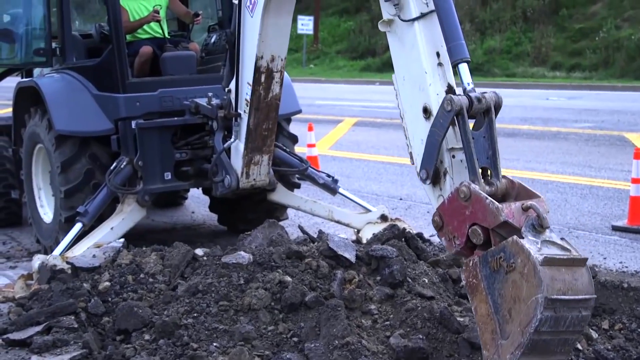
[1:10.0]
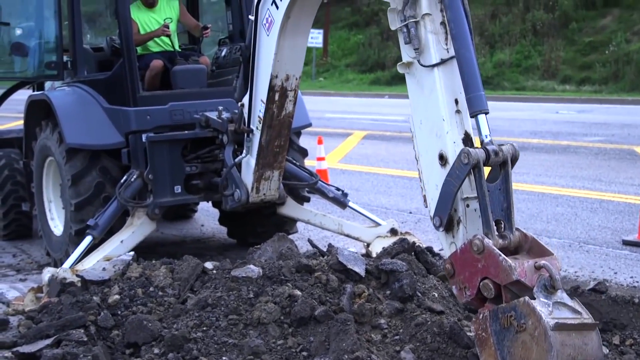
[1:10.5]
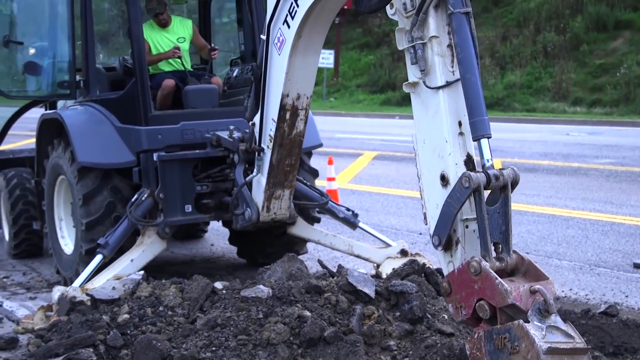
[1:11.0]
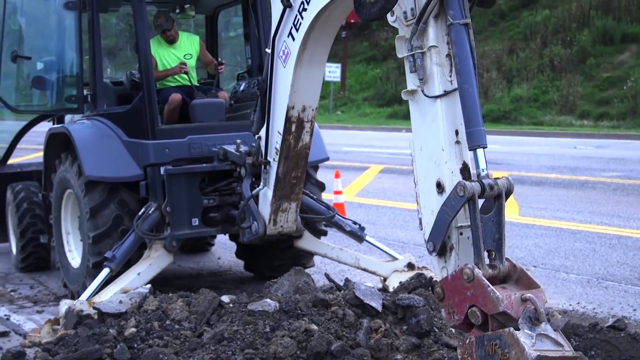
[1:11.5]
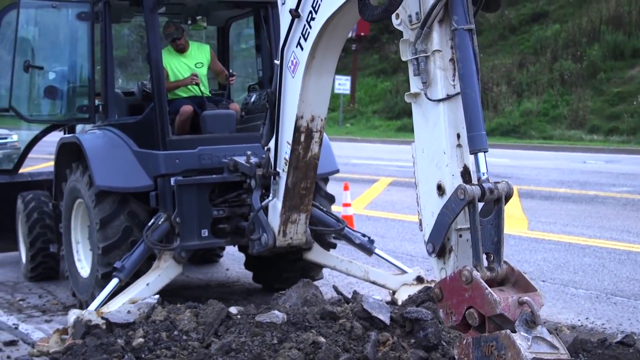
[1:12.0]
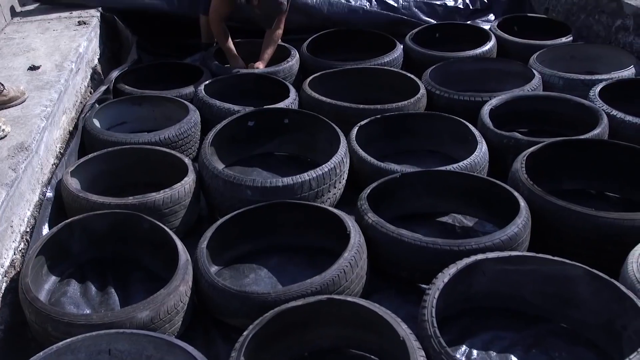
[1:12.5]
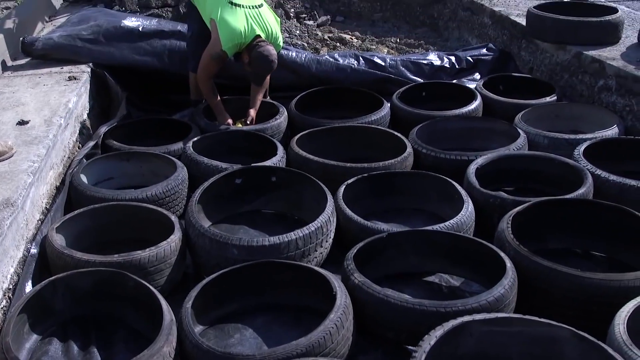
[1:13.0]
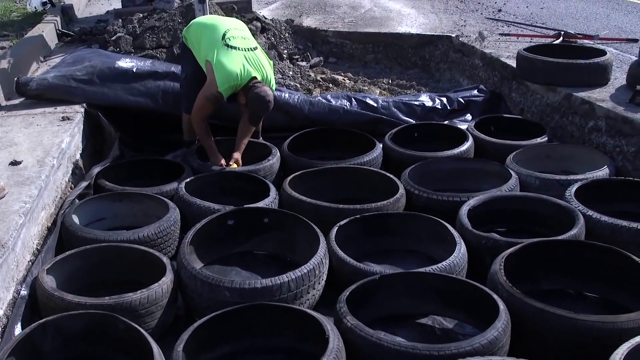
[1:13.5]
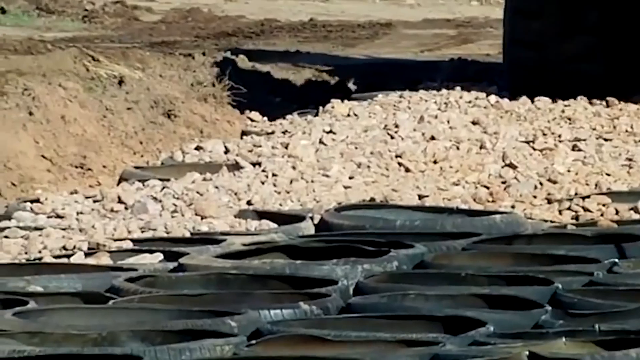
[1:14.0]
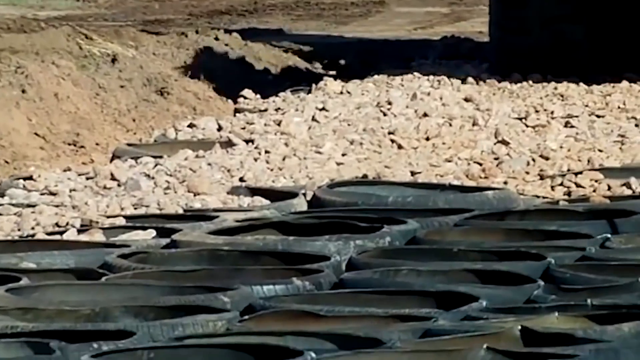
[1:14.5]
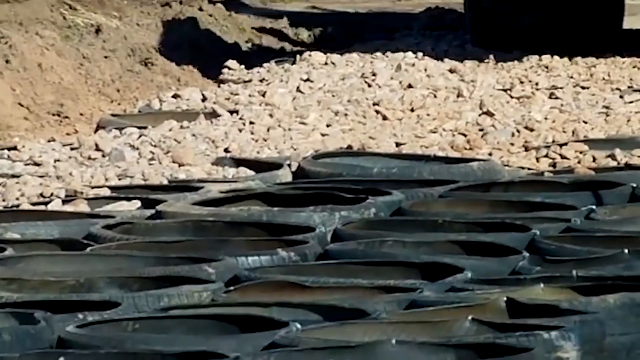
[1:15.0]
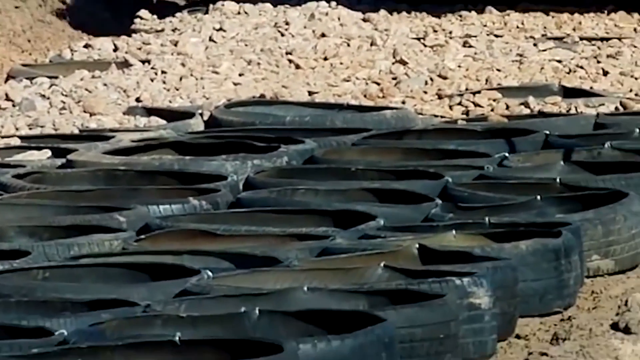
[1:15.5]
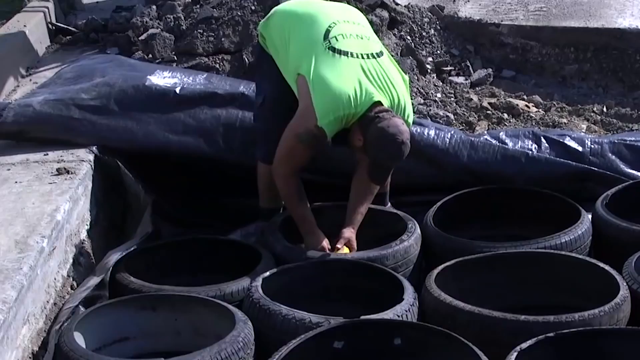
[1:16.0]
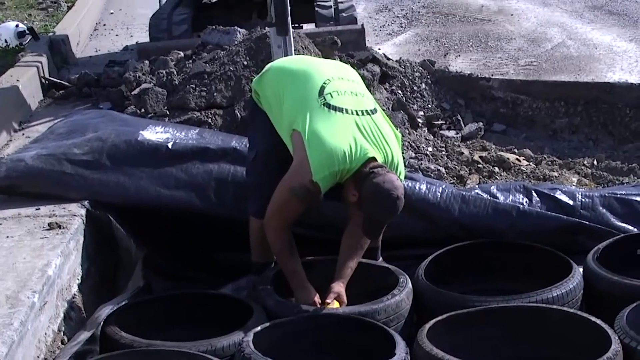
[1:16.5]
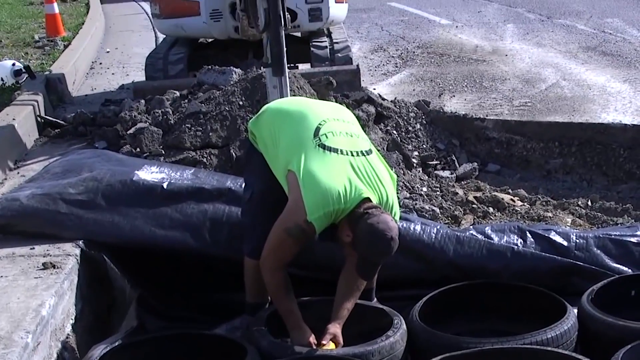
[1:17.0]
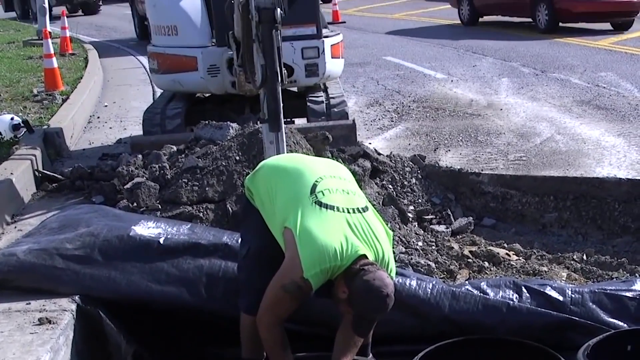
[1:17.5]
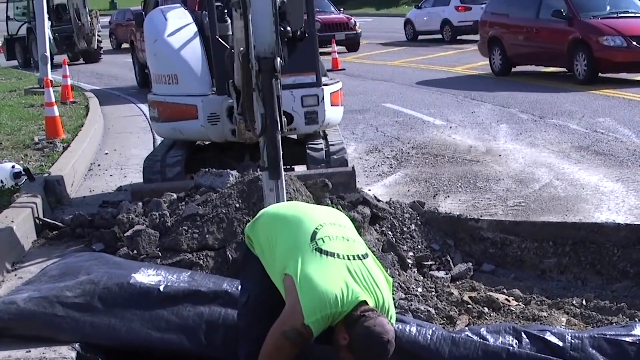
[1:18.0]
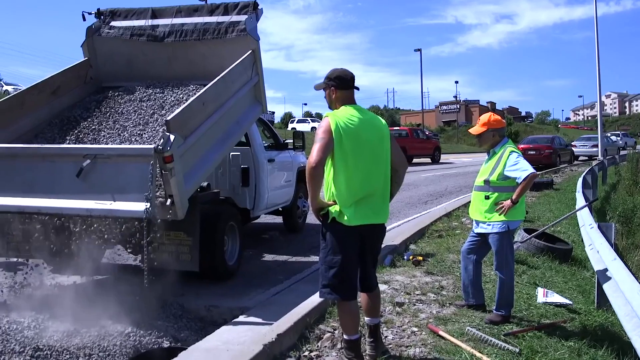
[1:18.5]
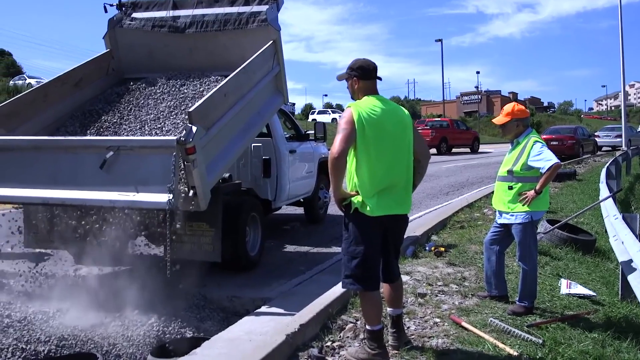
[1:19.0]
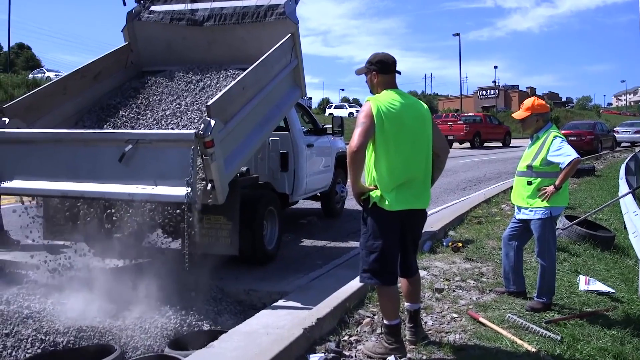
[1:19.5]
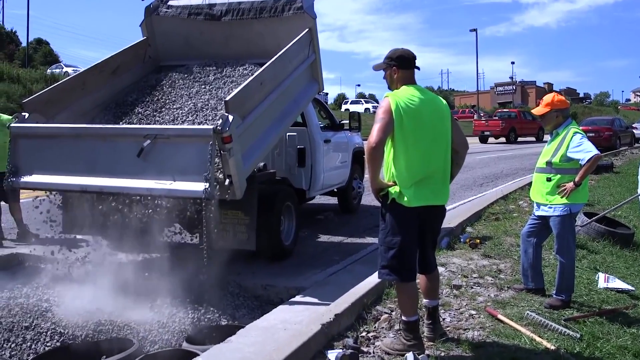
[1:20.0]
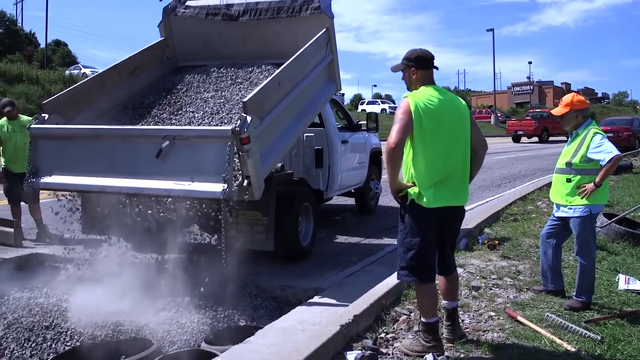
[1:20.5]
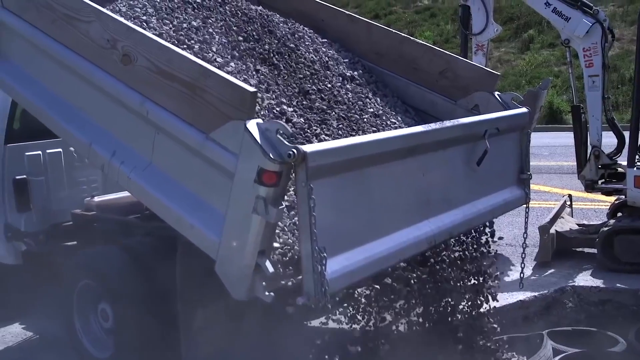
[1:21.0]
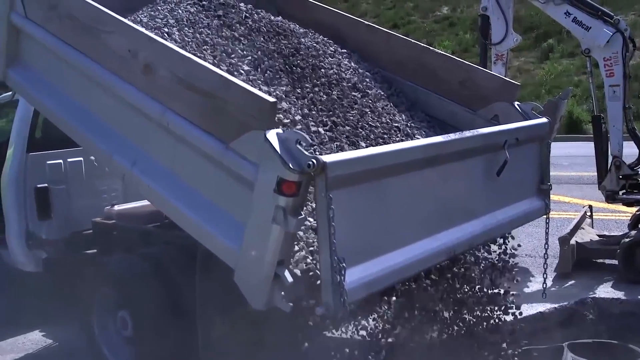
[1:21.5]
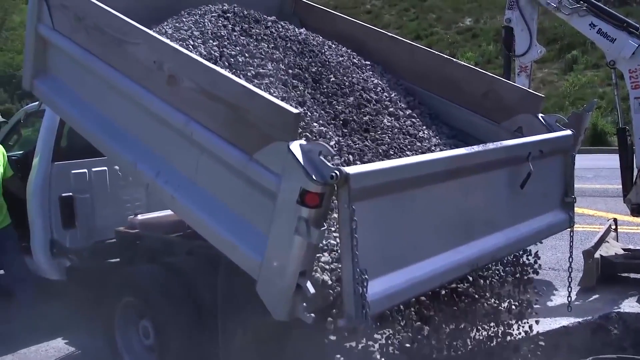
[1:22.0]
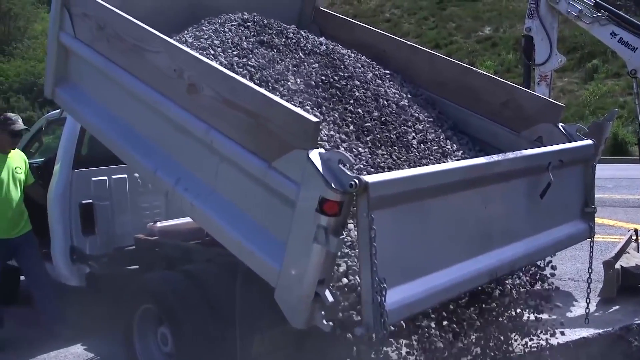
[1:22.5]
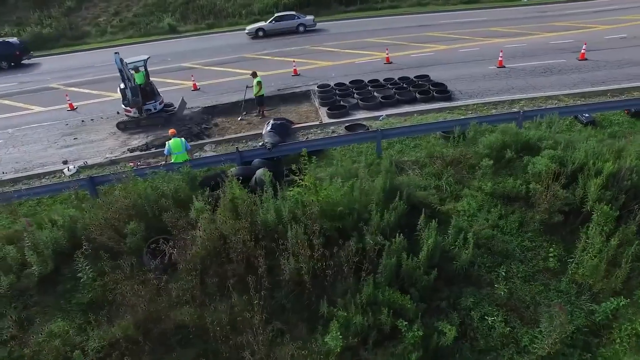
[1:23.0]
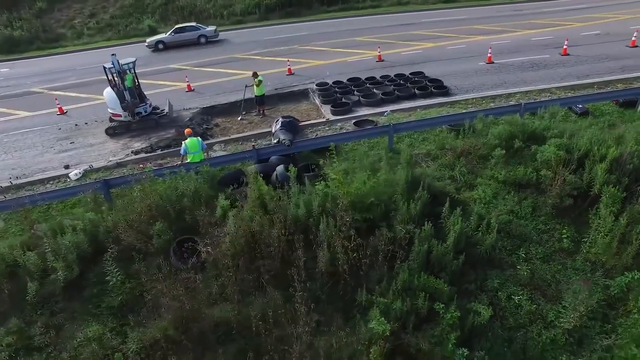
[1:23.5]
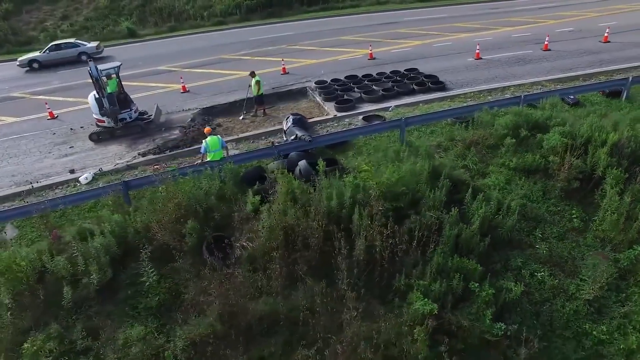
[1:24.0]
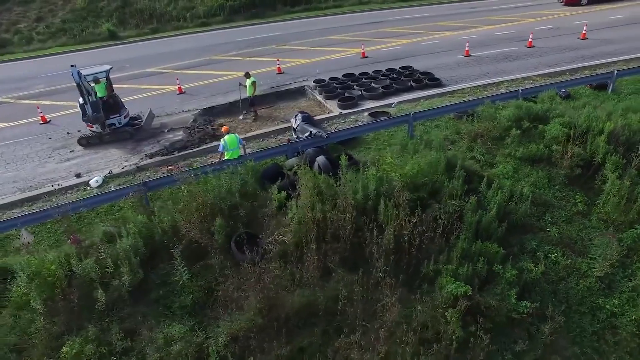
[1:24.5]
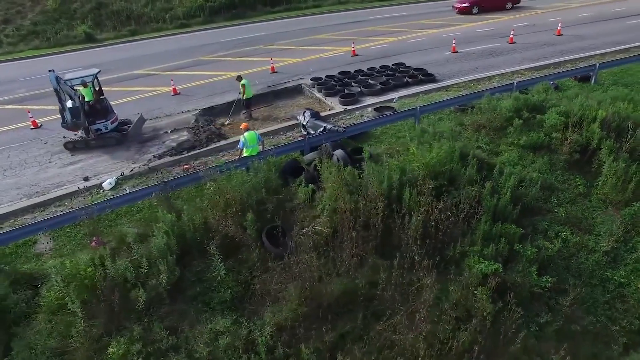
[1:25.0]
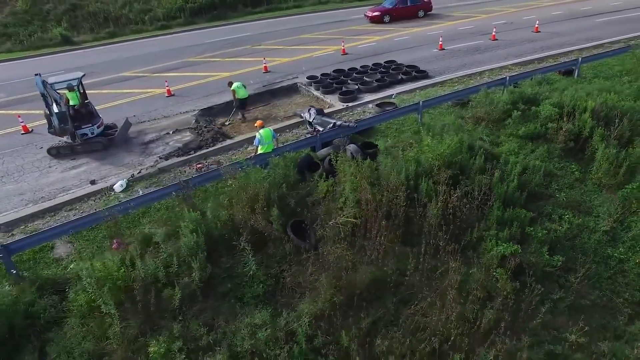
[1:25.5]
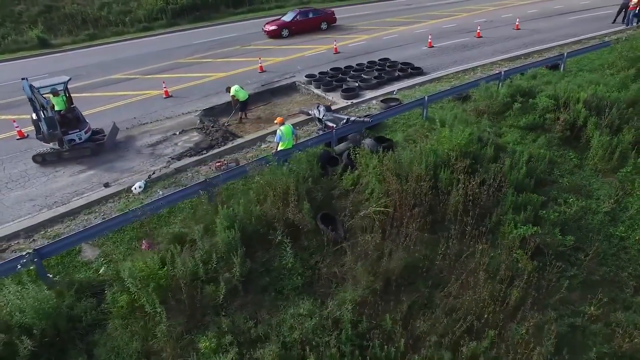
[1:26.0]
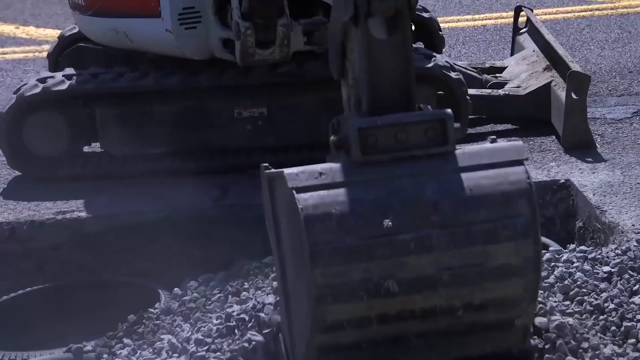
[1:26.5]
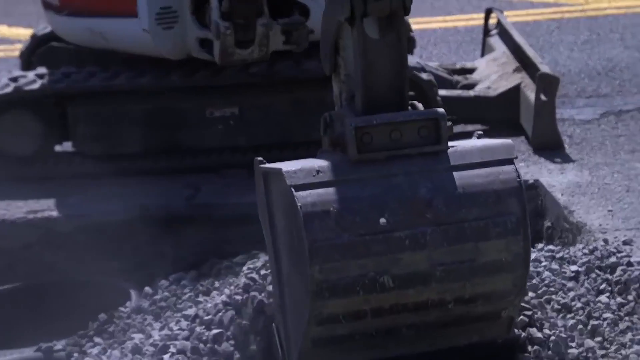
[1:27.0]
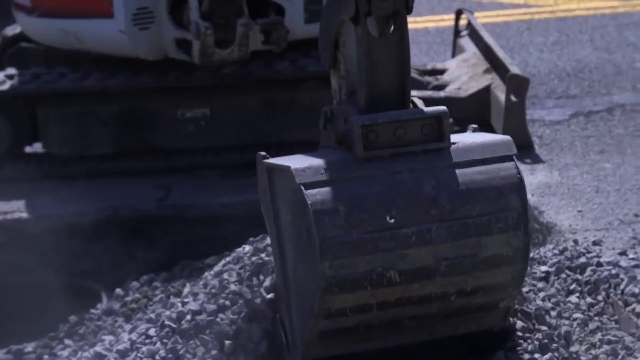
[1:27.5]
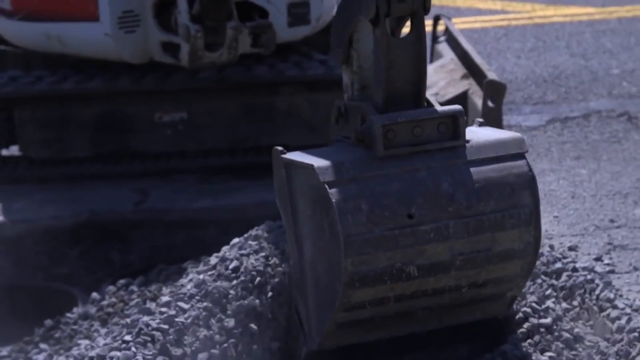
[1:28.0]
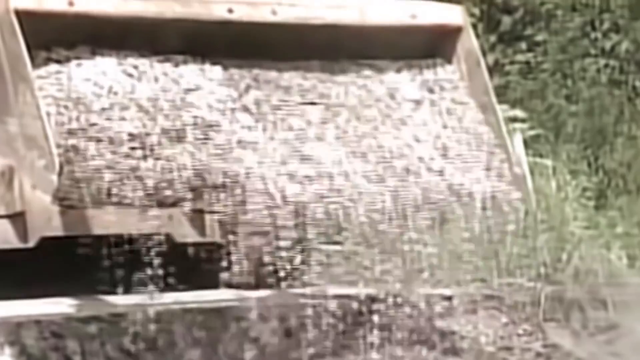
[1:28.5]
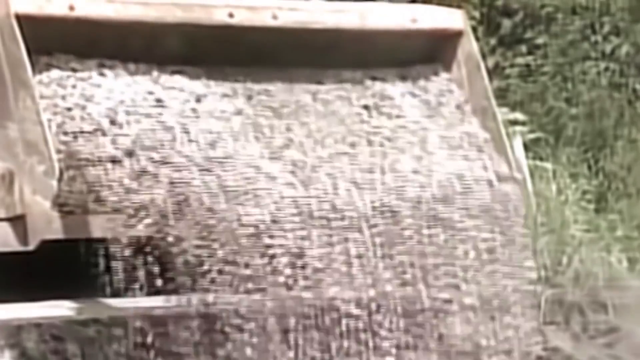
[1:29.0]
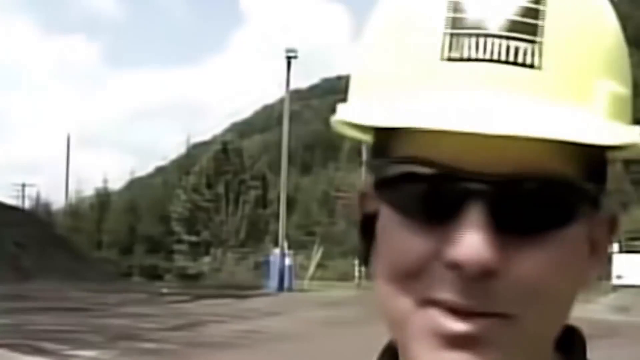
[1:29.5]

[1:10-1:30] A machine digs open the ground, and the video transitions to show the dug-up area now filled with hollowed-out car wheels. A blue, sort of foam or rubber sheet holds black sediment and rocks, probably waste collected from cutting out part of the road. A man in a green shirt works on the wheels, probably putting something in them. The video cuts to two more wheels about to be rolled over by a very heavy yellow construction vehicle, then returns to the man working on the wheels. In a different shot, he stands beside another man as they watch rocks being poured over the road while traffic moves in the background.